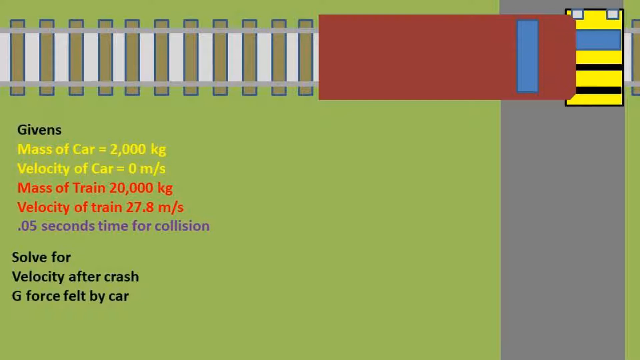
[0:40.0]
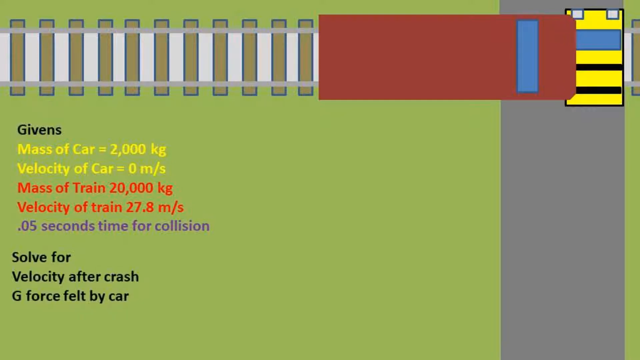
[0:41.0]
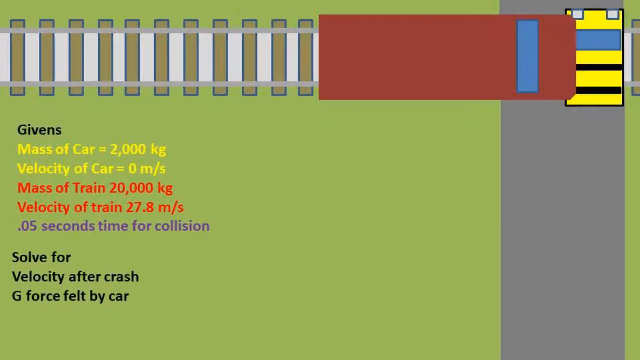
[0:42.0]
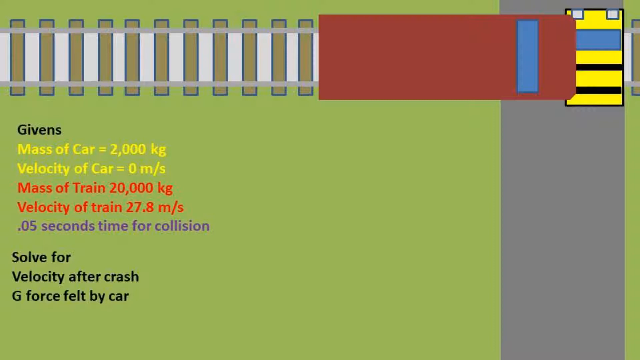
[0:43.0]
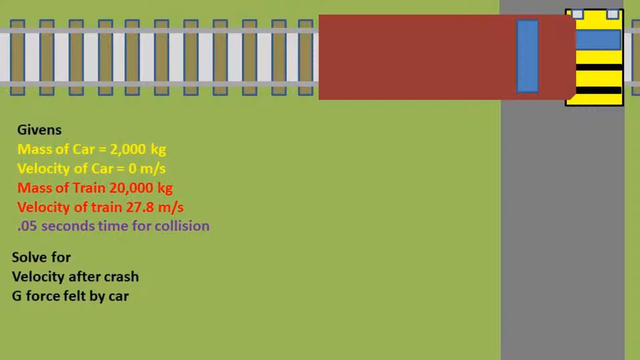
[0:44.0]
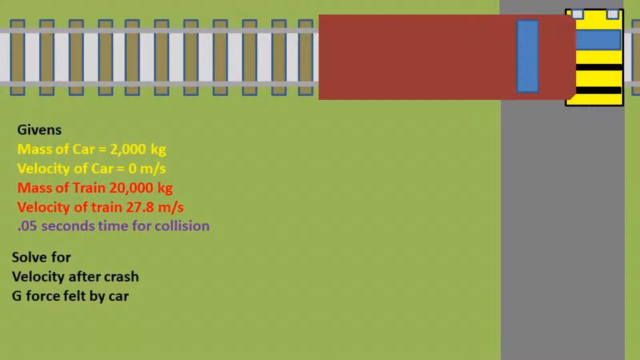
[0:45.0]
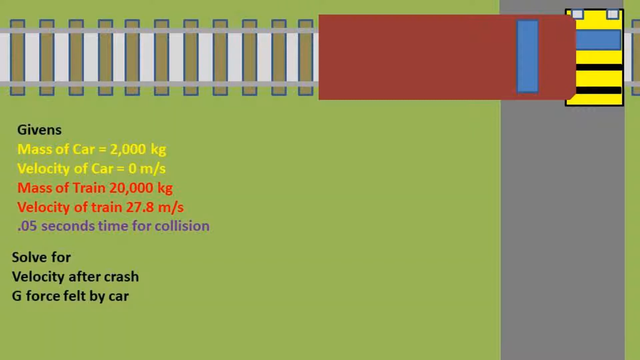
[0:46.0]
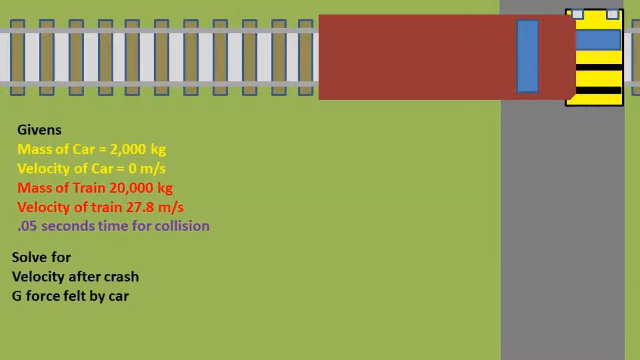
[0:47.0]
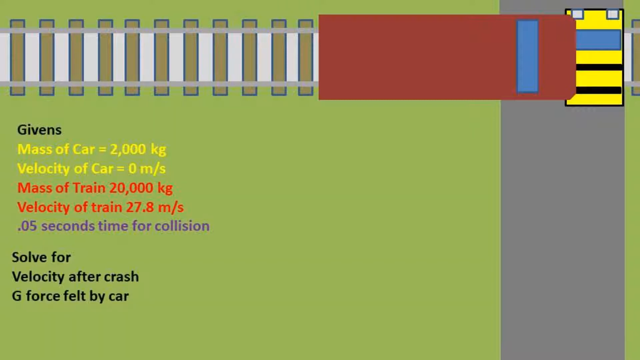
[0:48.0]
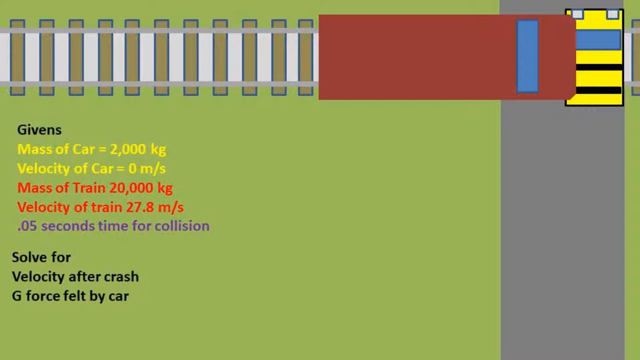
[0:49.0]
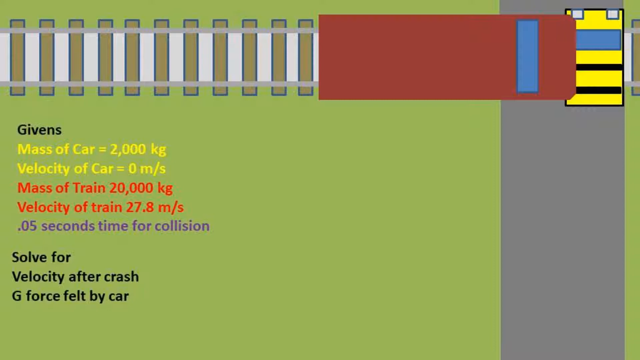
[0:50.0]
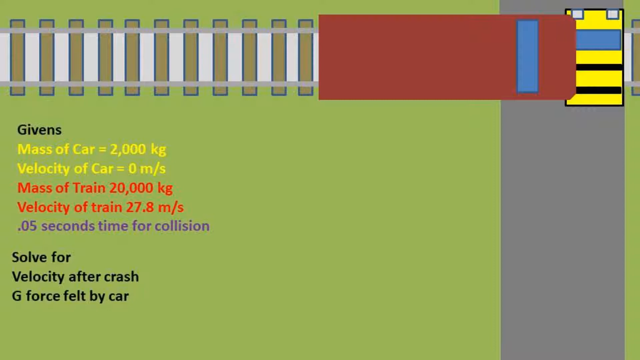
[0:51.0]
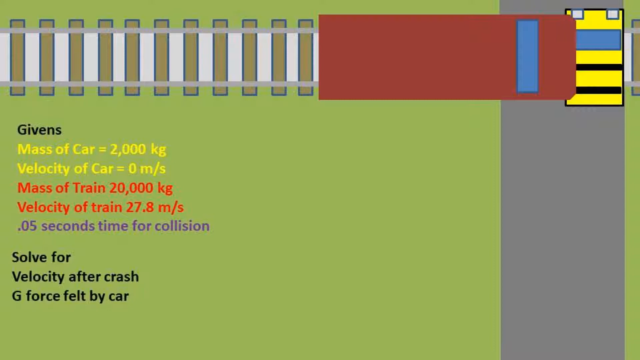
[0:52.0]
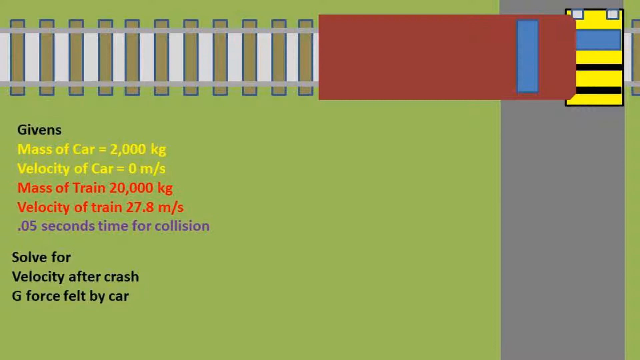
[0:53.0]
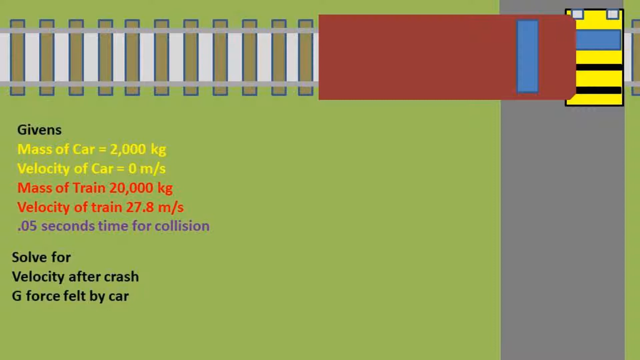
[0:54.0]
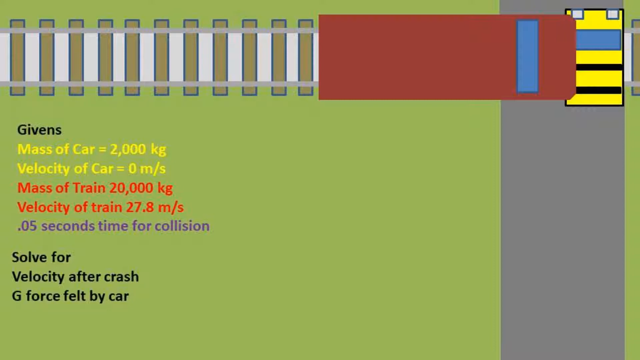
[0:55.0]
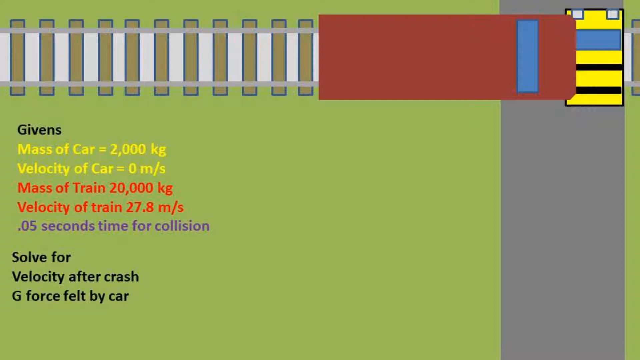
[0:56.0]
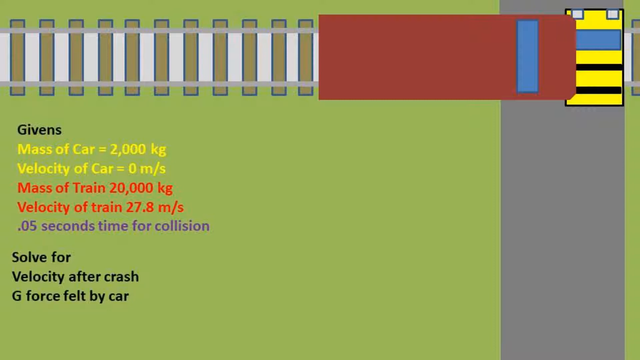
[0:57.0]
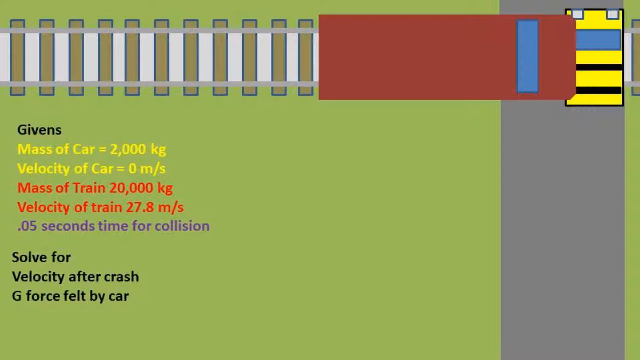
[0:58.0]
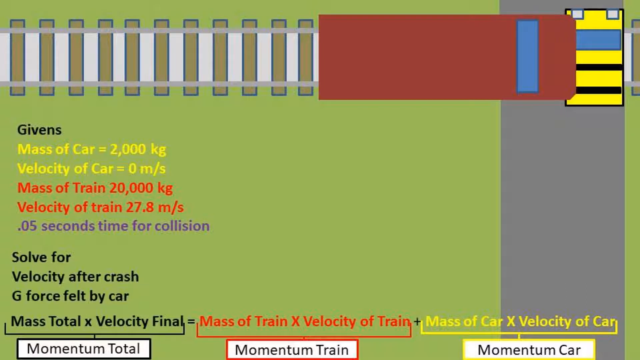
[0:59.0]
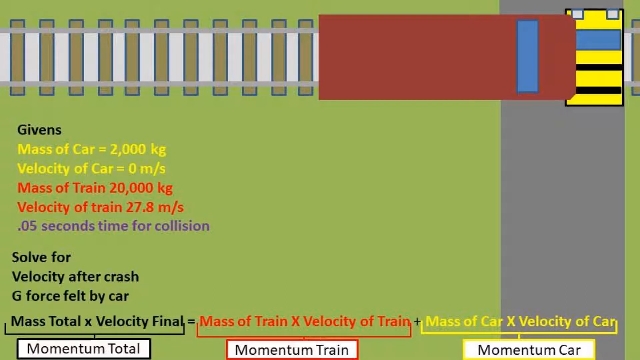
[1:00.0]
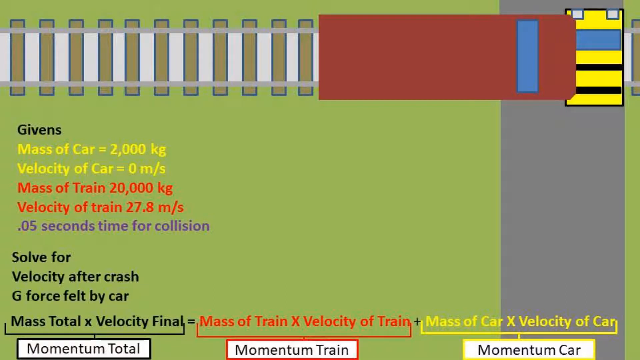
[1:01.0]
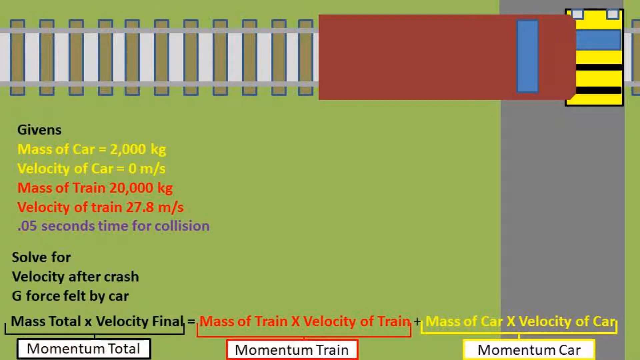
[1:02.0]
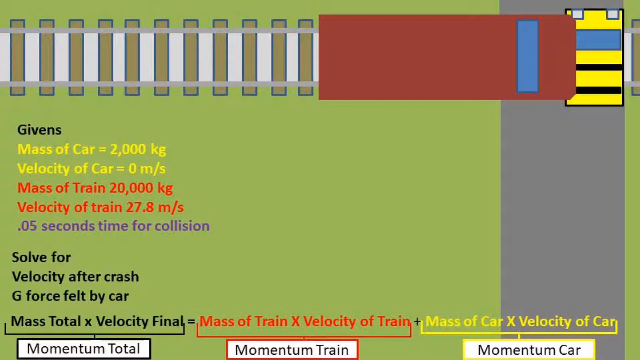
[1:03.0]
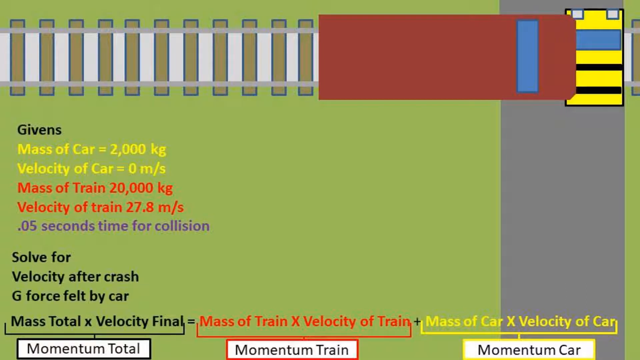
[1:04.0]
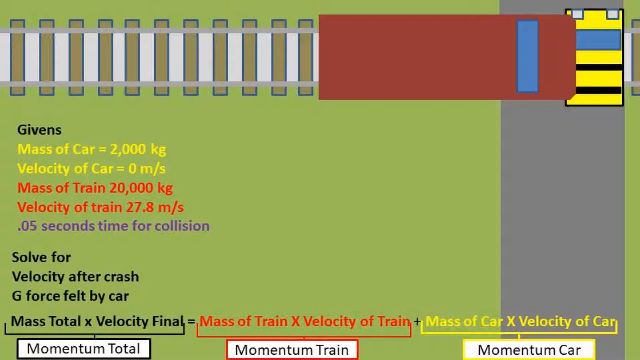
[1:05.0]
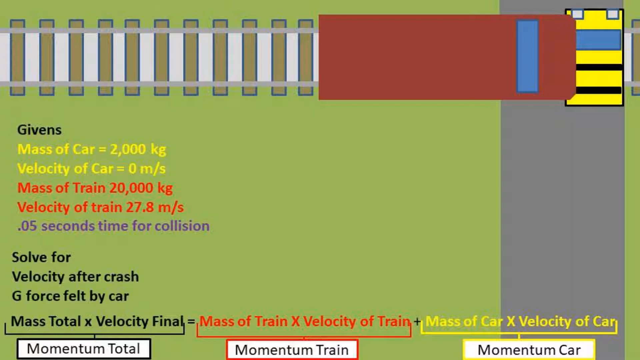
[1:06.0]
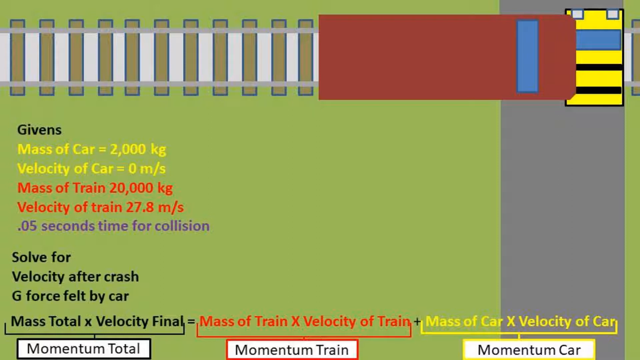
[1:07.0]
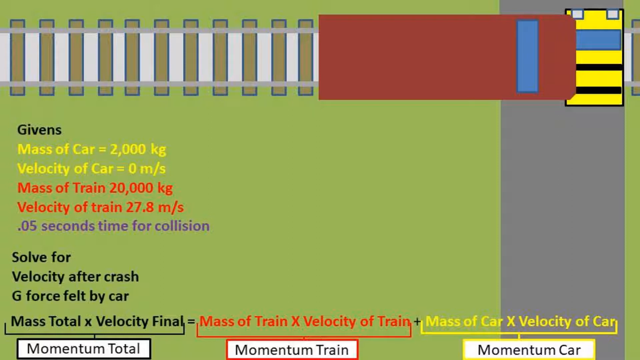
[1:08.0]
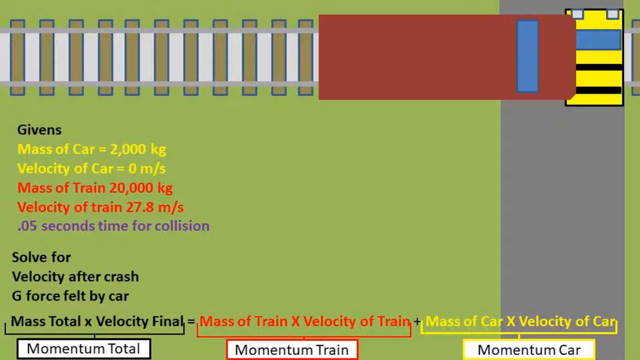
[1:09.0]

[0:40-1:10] An animated image shows a car stopped on train tracks and a train that has hit it. A large number of givens are listed: the mass of the car, the velocity of the car, the mass of the train, the velocity of the train, and a collision time of 0.05 seconds. Black text asks the viewer to solve for the velocity after the crash and the g-force felt by the car. Formulas appear, stating that the momentum of the train plus the momentum of the car equals the total momentum. Colours are used consistently: the car in the diagram is yellow, the car's givens are in yellow font, and the car's momentum in the equation is also yellow.